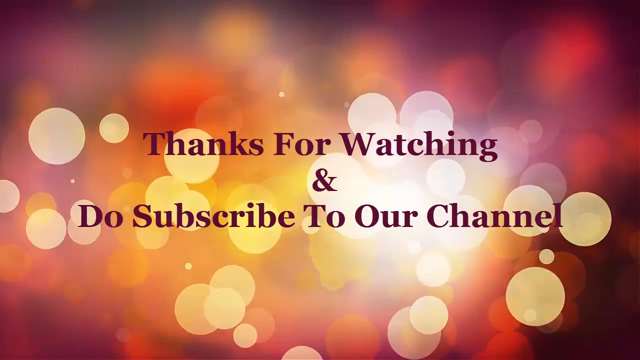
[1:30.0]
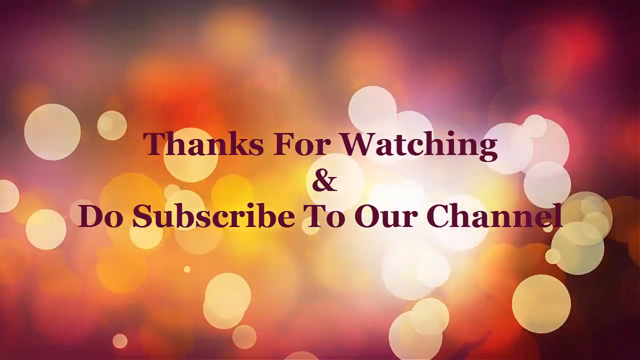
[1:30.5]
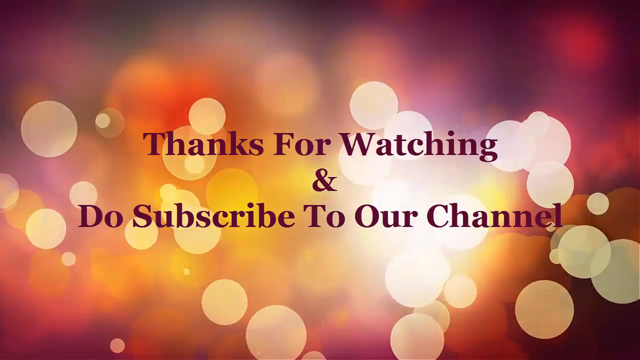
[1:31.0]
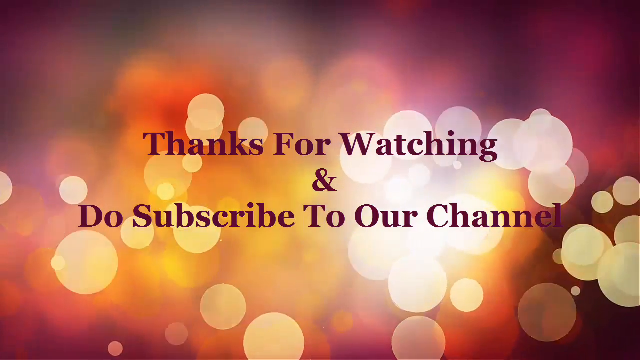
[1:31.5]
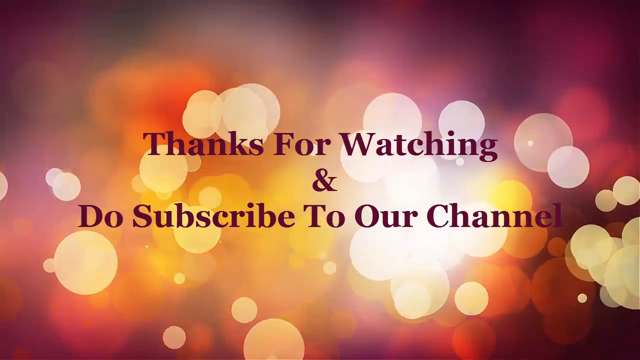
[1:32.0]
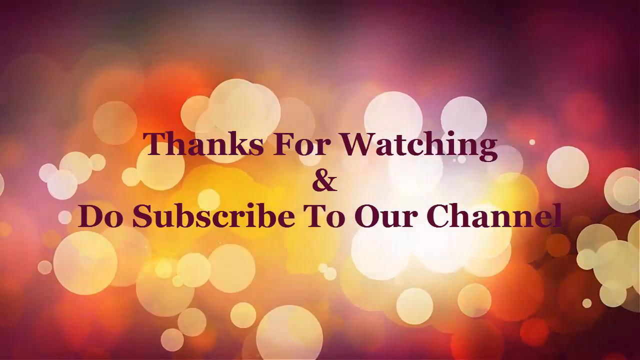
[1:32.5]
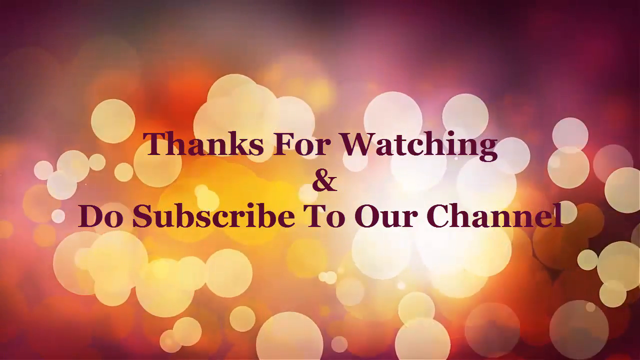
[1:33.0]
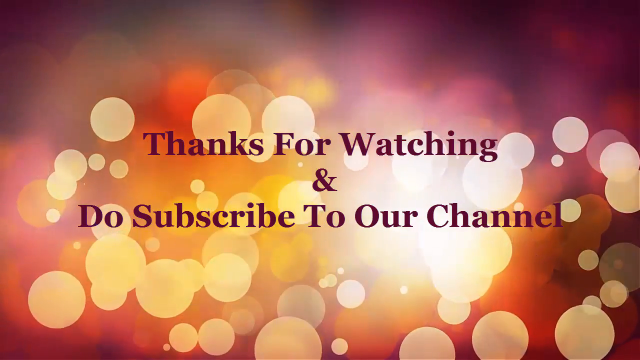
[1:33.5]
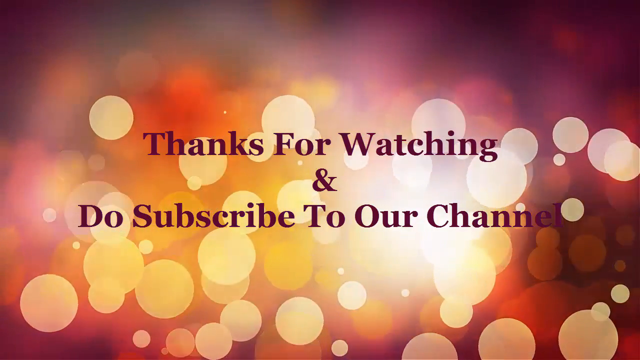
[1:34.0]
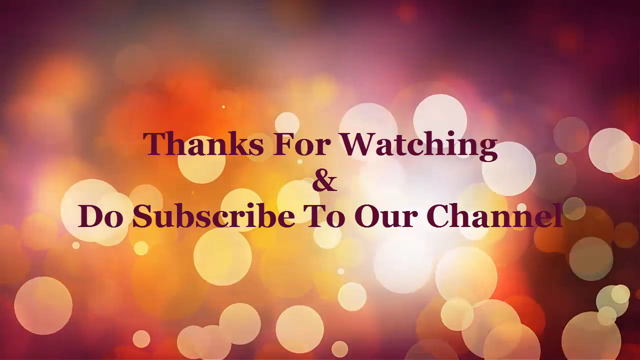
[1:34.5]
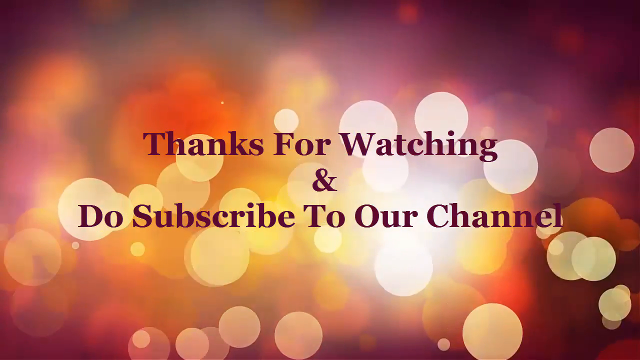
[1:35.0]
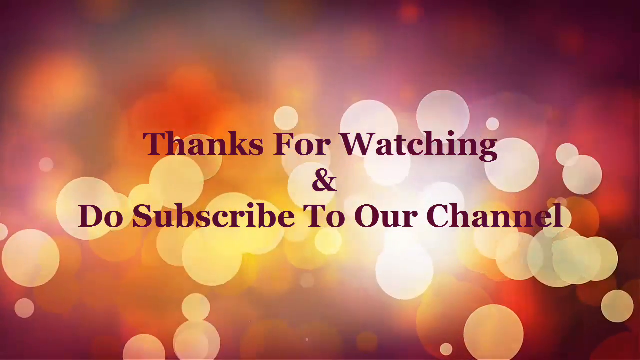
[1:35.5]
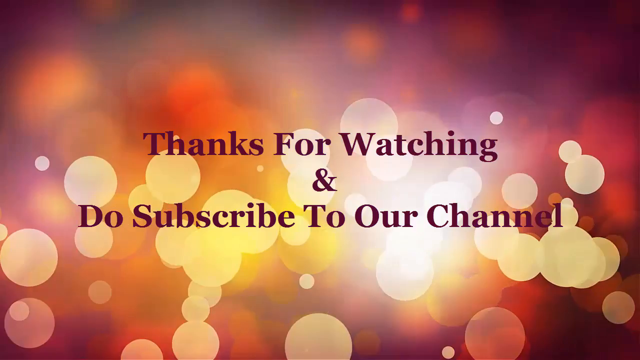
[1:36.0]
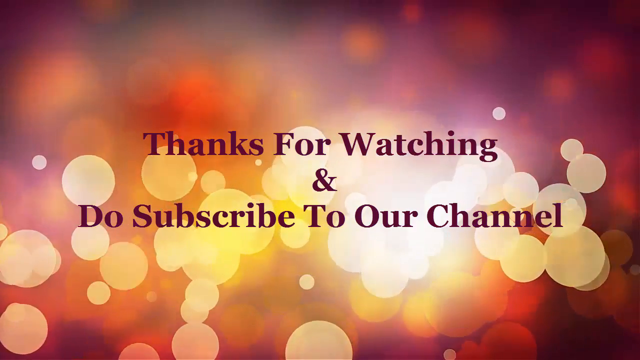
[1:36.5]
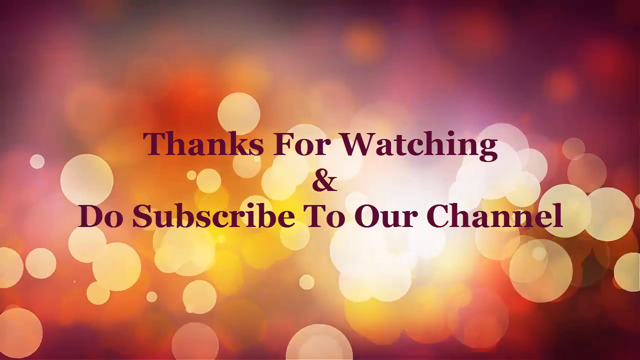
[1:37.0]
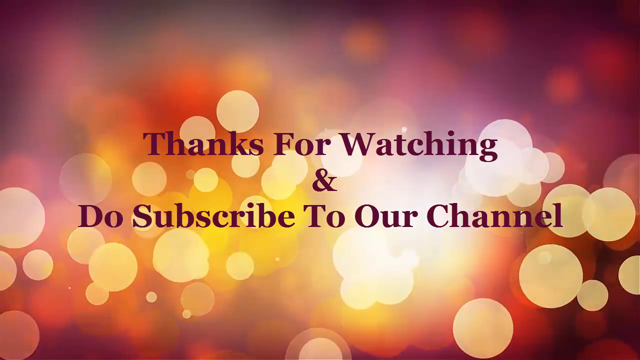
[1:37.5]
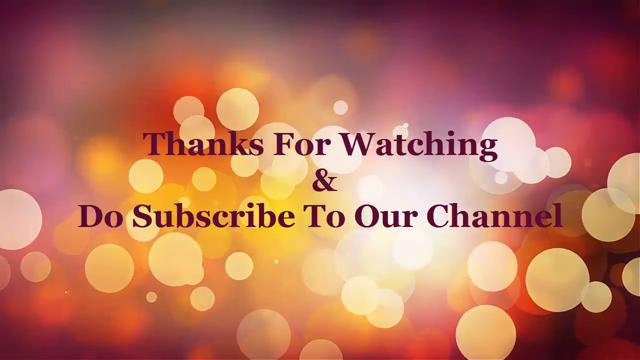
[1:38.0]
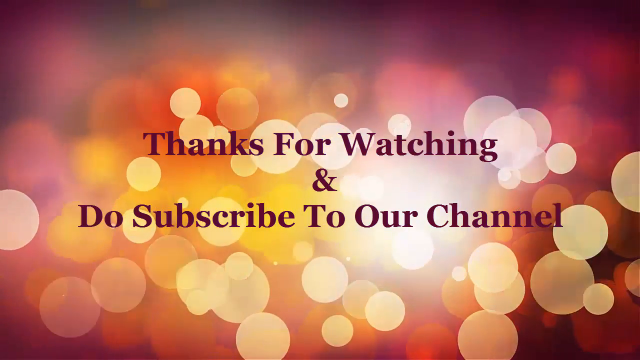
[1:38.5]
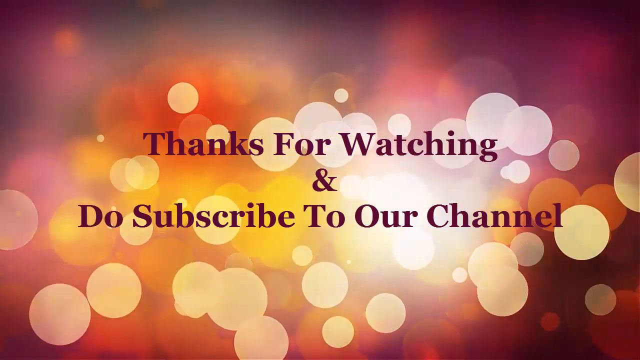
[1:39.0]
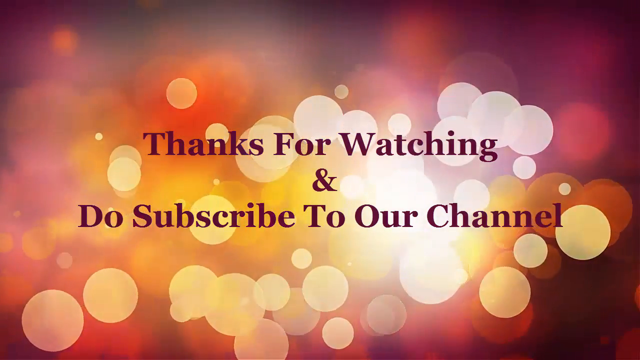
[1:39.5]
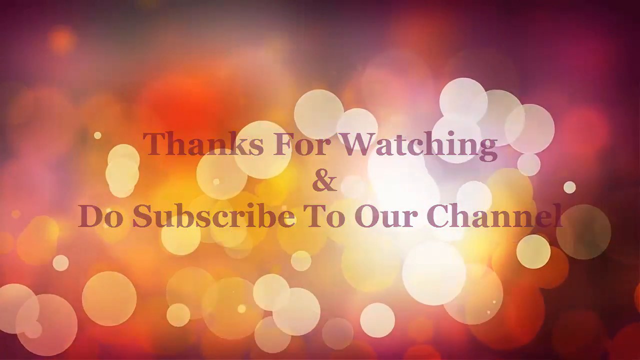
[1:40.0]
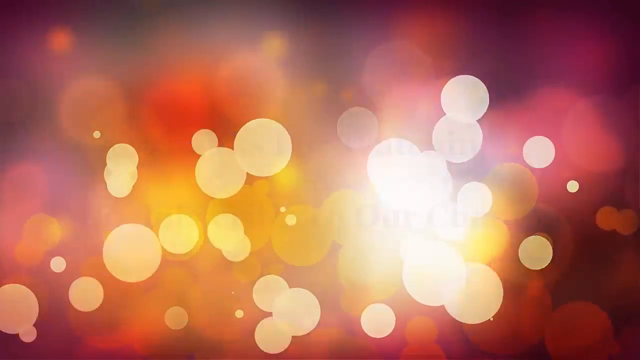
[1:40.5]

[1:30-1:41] The statement "thanks for watching and do subscribe to our channel" is shown. The computer seems to be working faster, and the settings he went through appear to have been restored to their original positions.